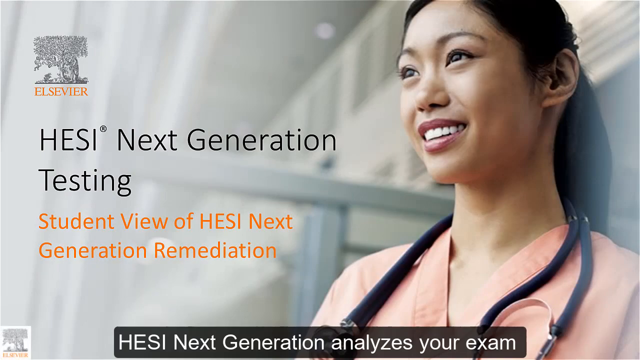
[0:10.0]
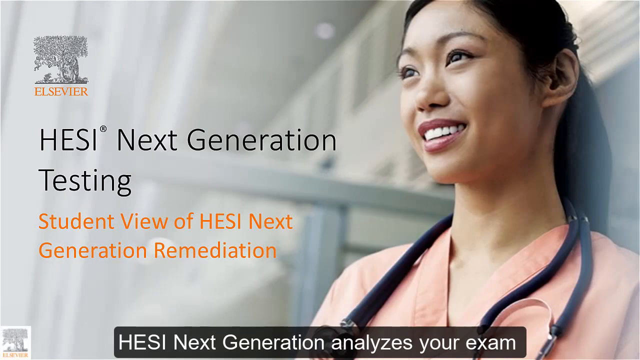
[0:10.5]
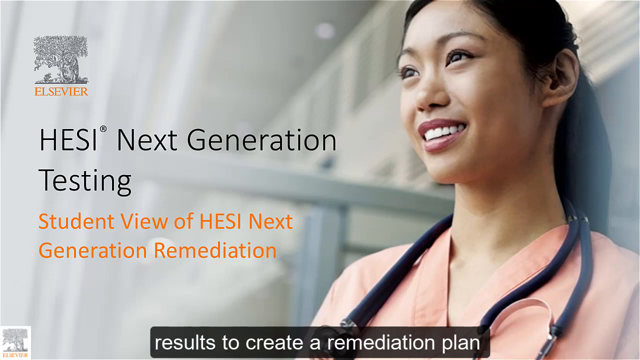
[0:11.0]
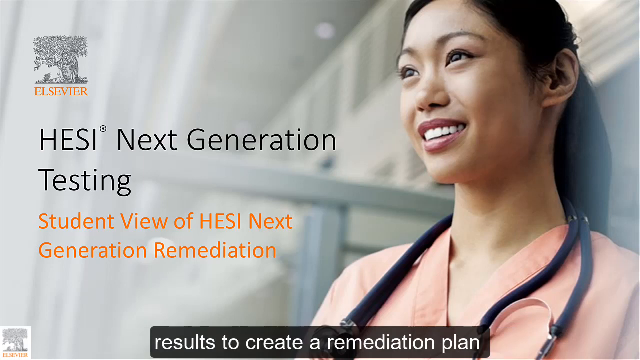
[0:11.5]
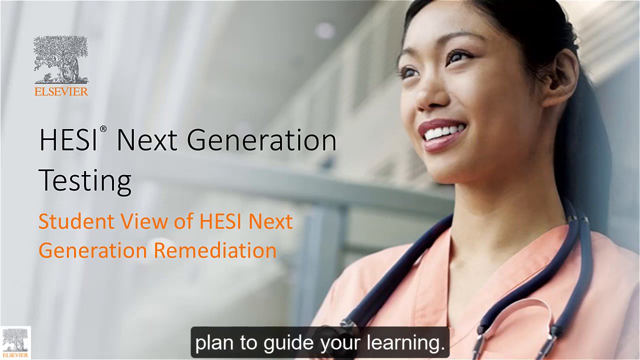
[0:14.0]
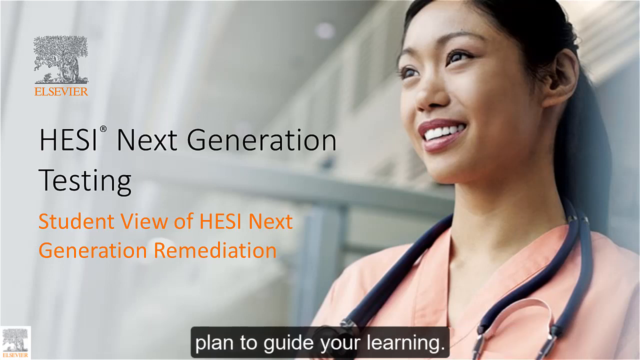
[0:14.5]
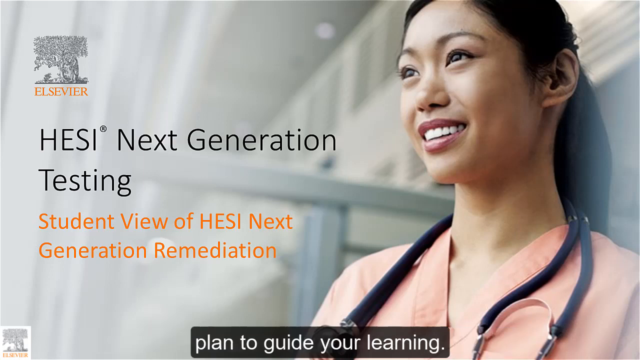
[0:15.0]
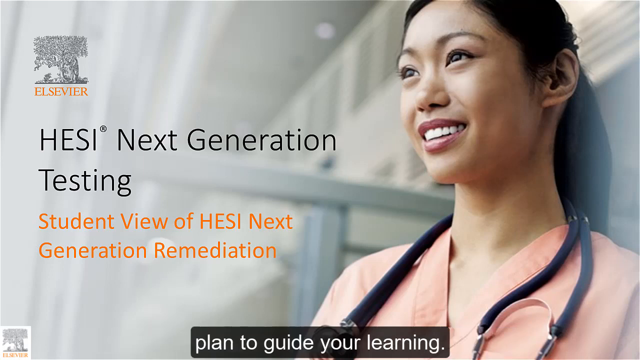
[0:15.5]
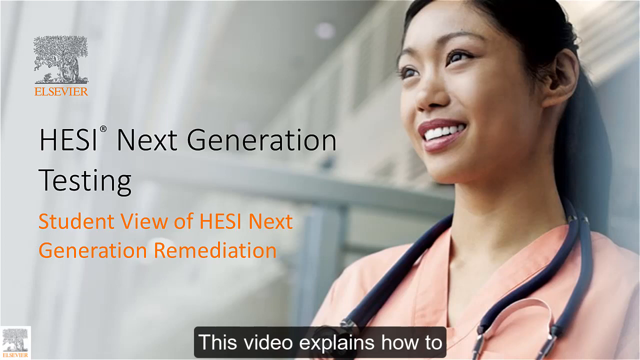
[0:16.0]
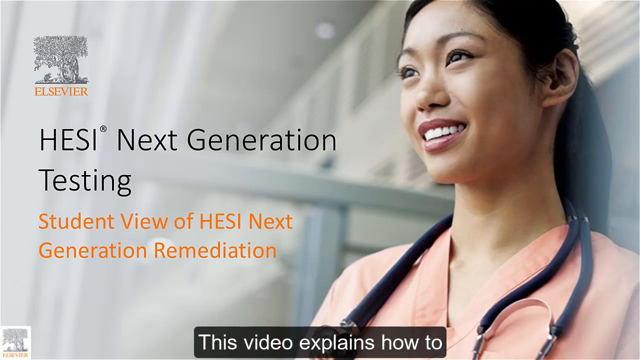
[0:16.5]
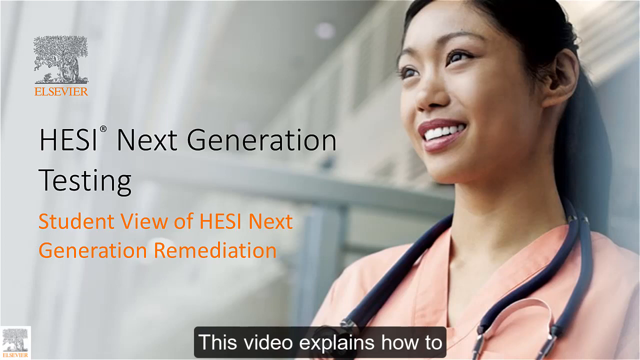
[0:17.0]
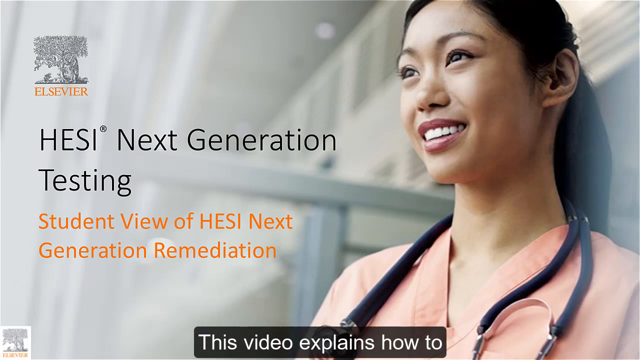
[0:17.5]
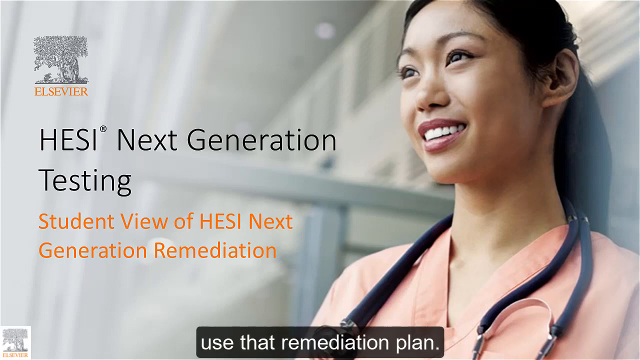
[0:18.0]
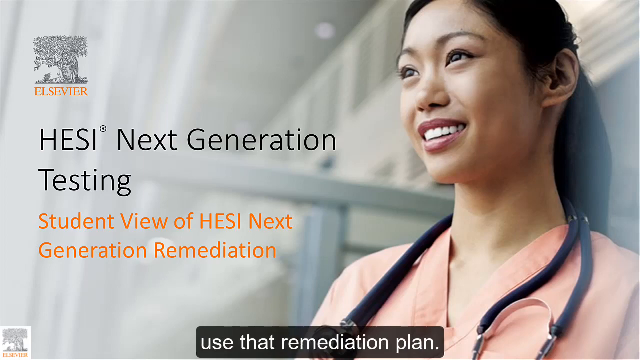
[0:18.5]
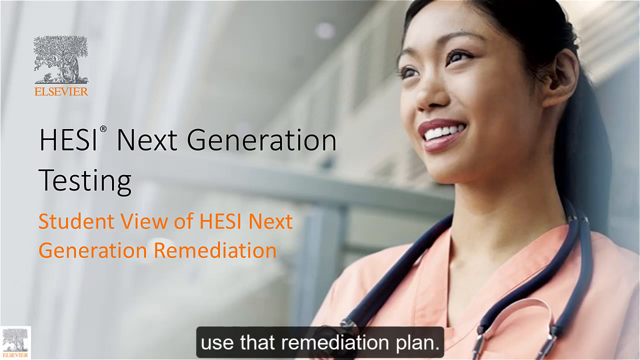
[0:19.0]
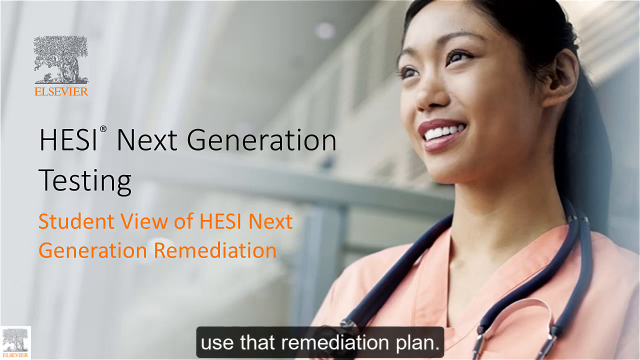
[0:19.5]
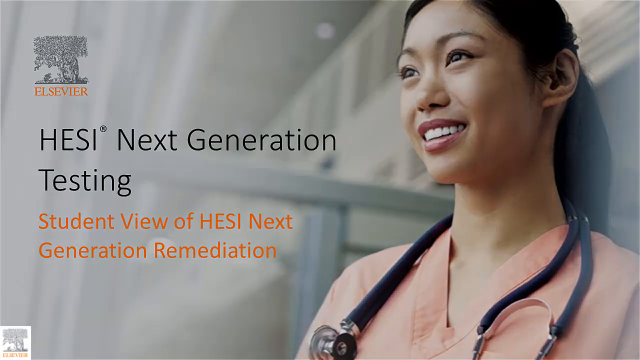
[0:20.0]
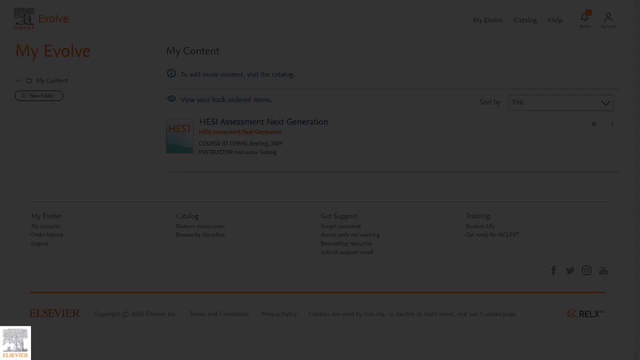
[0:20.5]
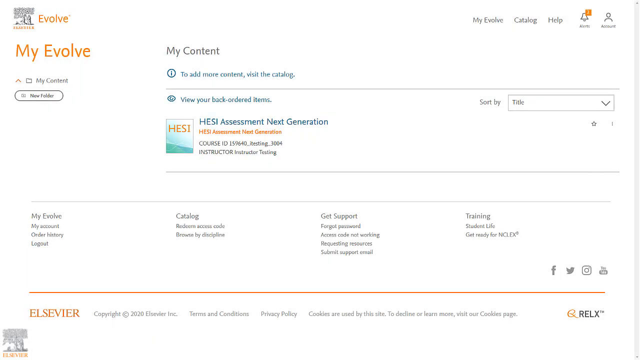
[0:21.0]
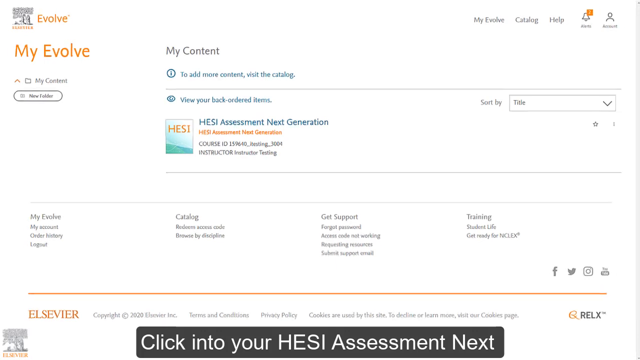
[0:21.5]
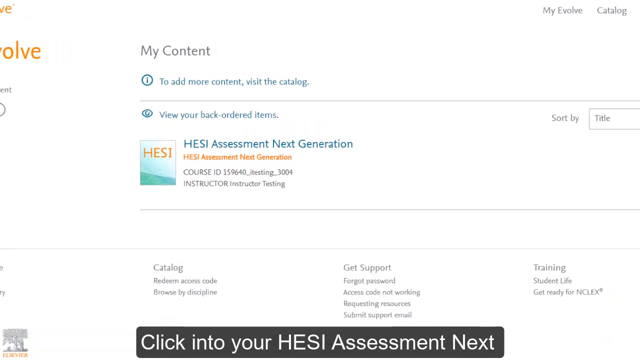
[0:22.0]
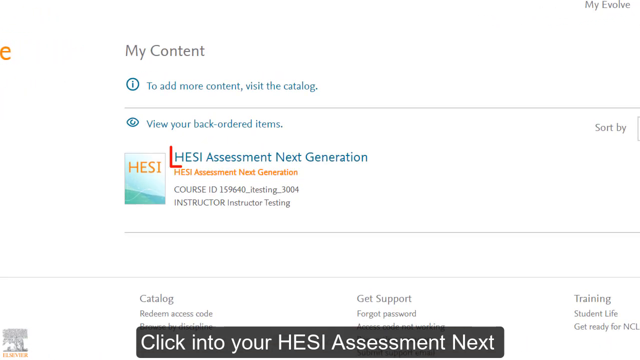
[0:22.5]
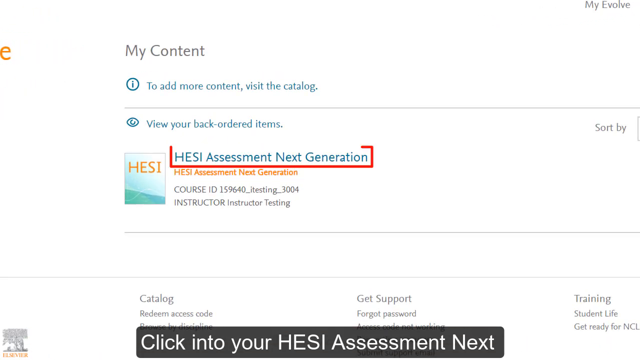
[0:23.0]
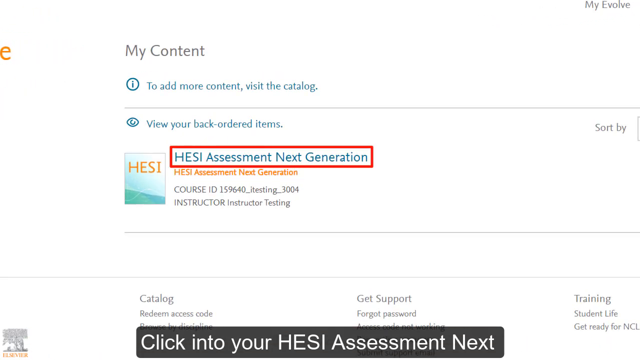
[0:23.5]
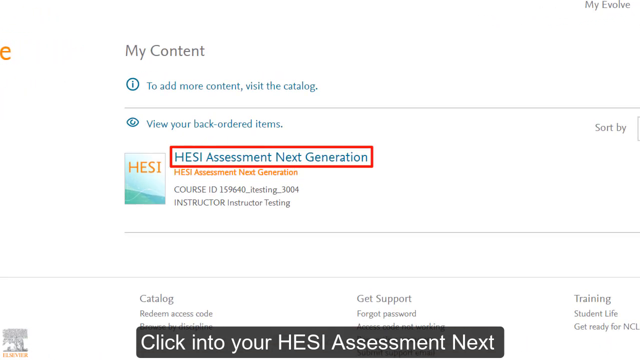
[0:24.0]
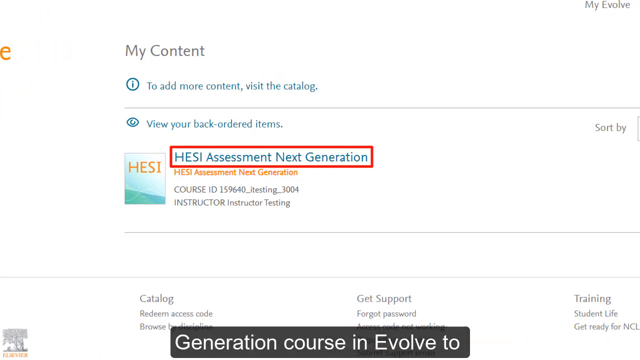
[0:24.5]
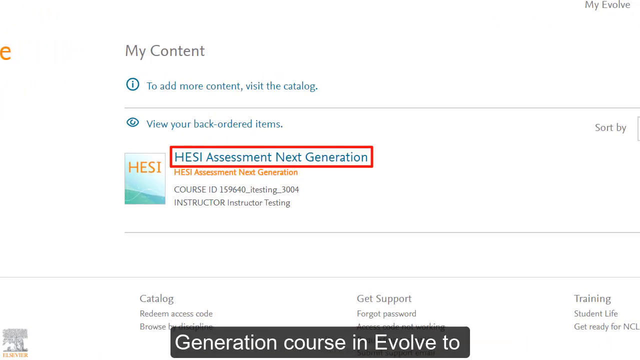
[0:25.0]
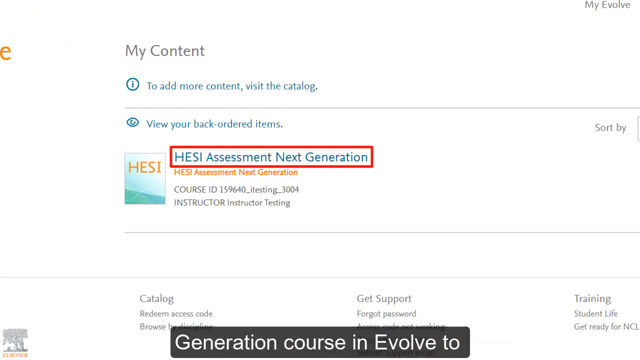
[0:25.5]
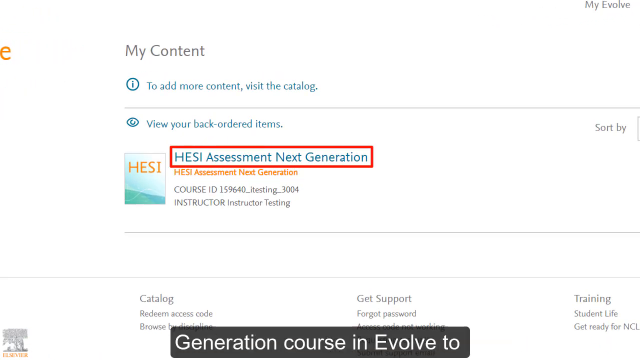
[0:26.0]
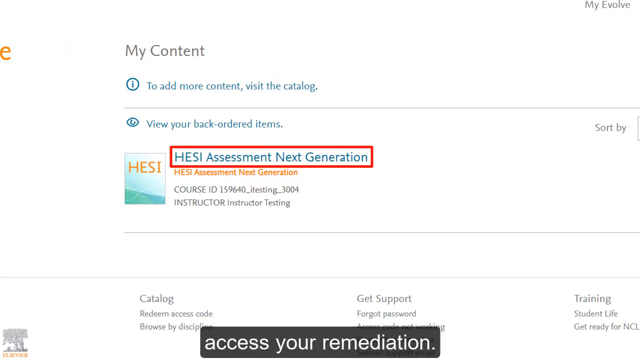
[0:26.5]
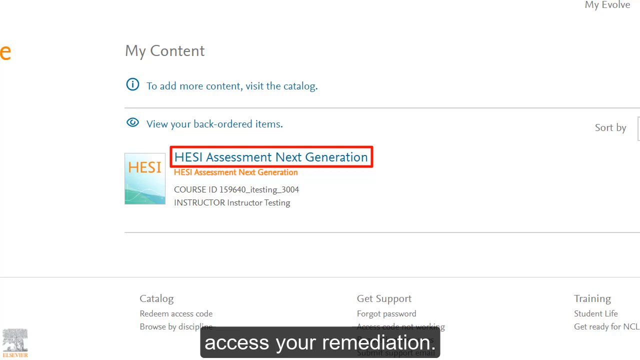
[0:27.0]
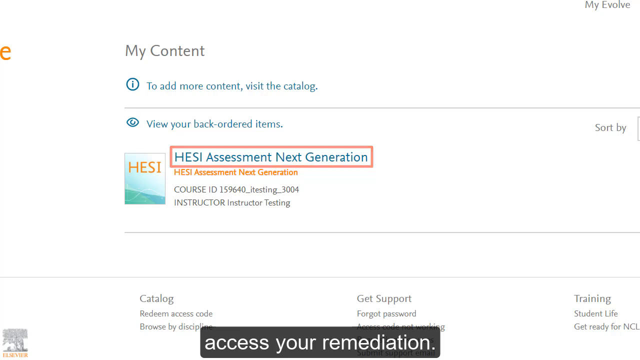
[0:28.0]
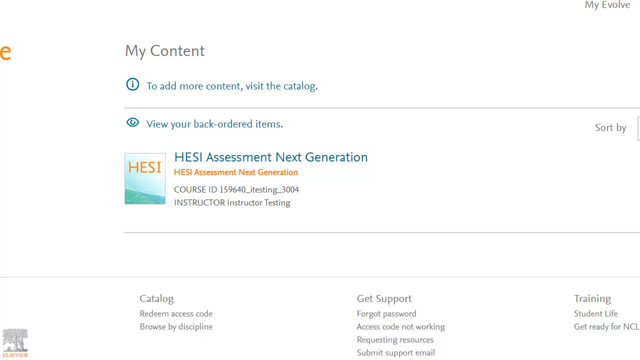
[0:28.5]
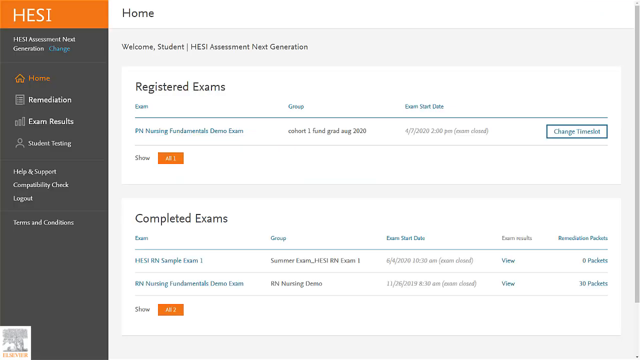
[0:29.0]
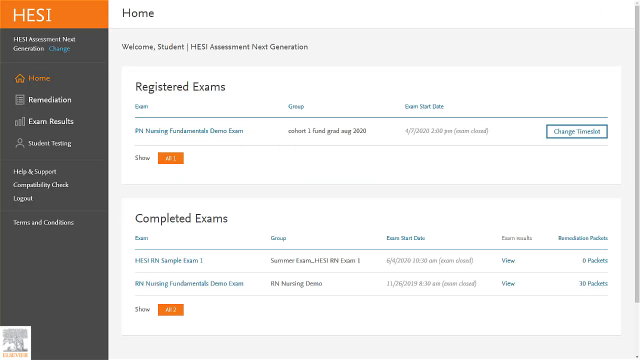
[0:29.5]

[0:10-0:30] The background shows an Elsevier logo with an image of a student in a blush coat, smiling, captured from her side, with the write-up "HESI, Next Generation Testing." Text reads "HESI, Next Generation Remedial," "Plan to guide your learning" and "This video explains how to use Remedial Plan." The first view of the site shows "my content," "To add more content, visit the catalogue," "View your back-ordered items," "HESI Assessment, Next Generation" and "Course ID." This is the Evolve student portal, with "my Evolve," "my Contents" and "new folder" written on it. On the left-hand side are my Evolve, my account, order history, logout and Elsevier. On the right-hand side are HESI assessment next generation, course ID, instructor, catalog, redeem access code, browse my discipline, get support, forgot password, access code not working, requesting resources, submit support email, training, student life and get ready for. The site is a student remediation portal.